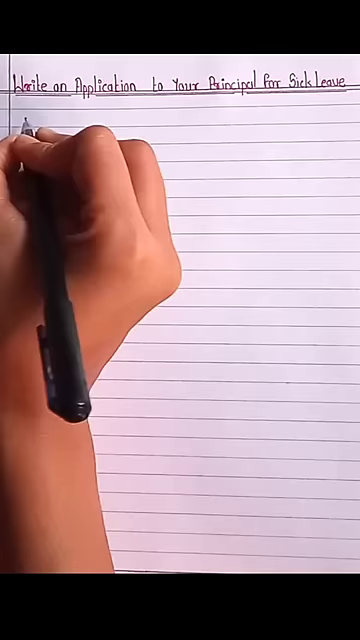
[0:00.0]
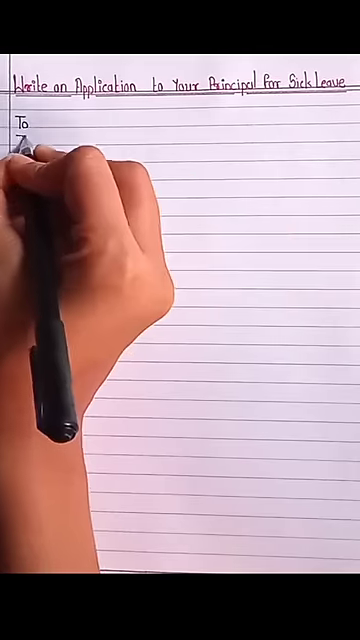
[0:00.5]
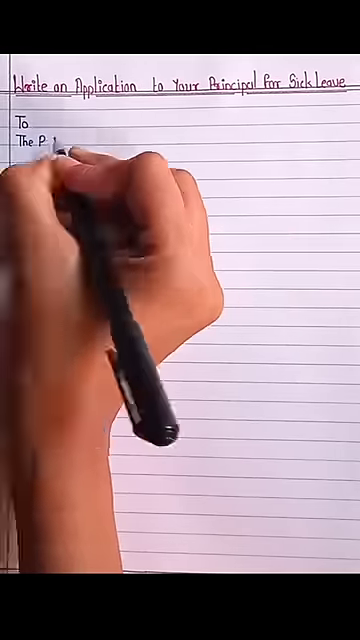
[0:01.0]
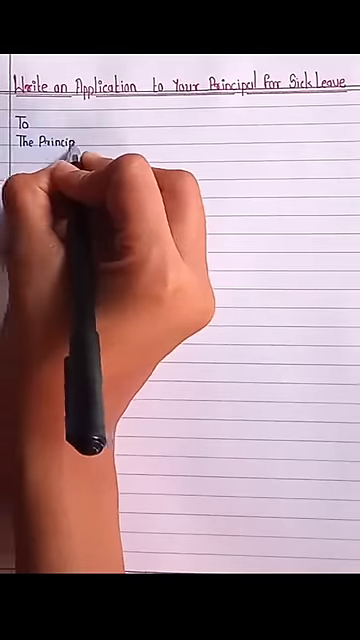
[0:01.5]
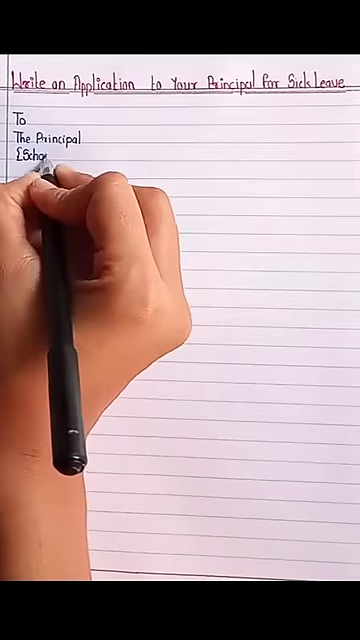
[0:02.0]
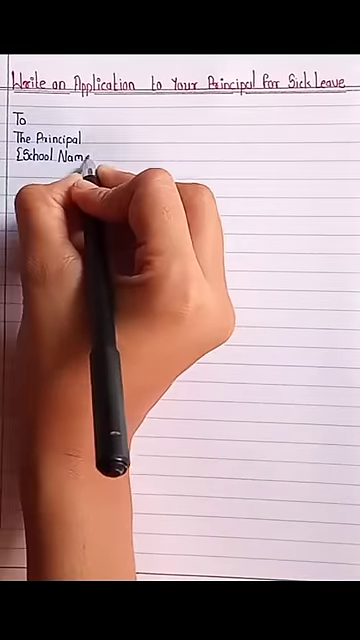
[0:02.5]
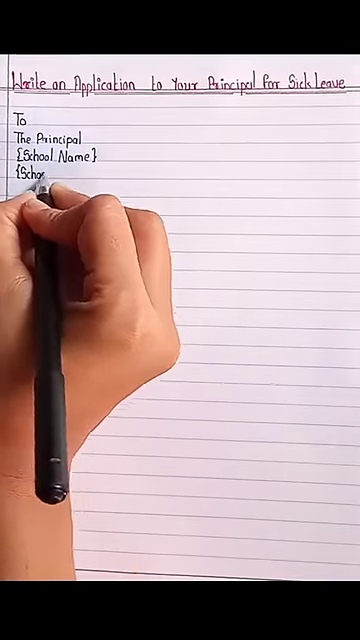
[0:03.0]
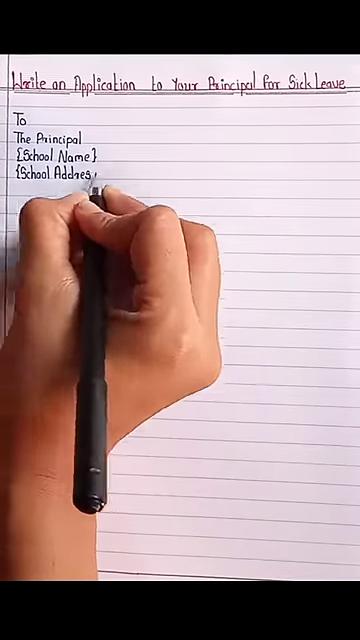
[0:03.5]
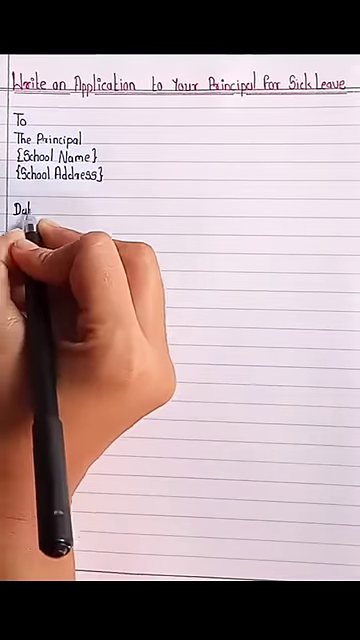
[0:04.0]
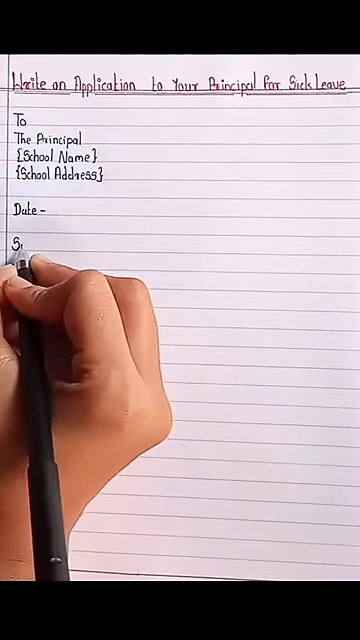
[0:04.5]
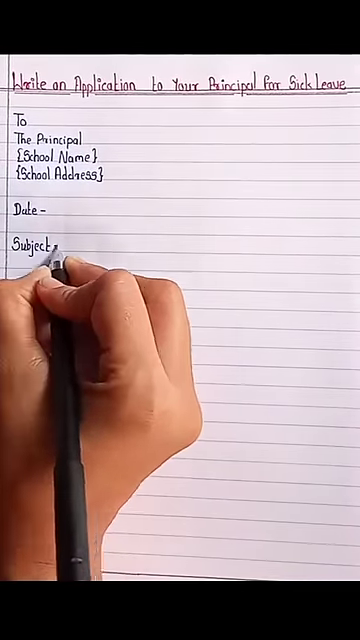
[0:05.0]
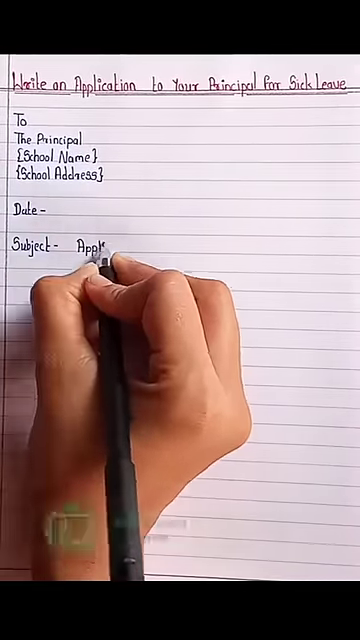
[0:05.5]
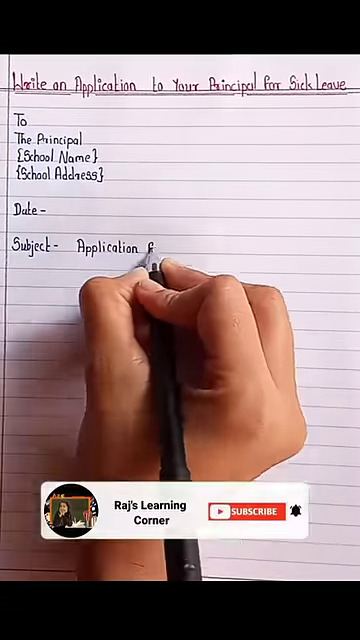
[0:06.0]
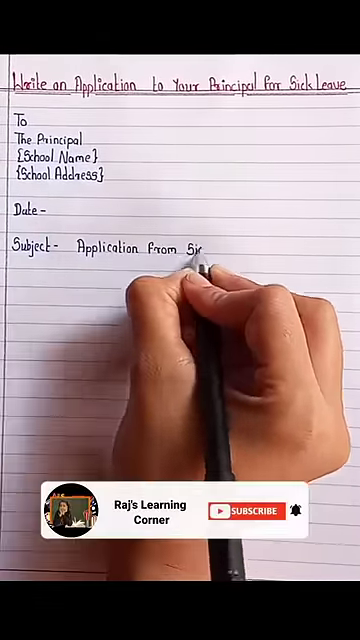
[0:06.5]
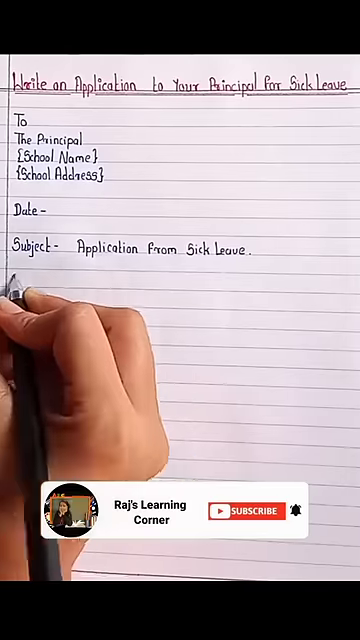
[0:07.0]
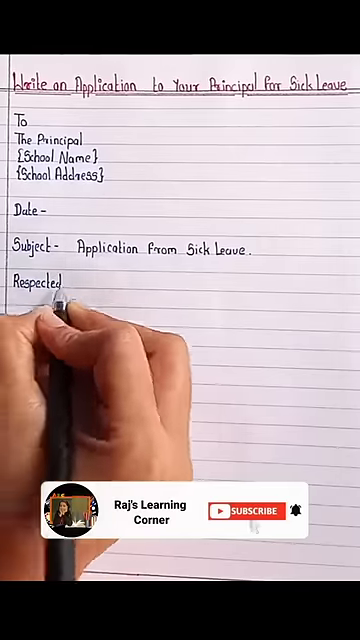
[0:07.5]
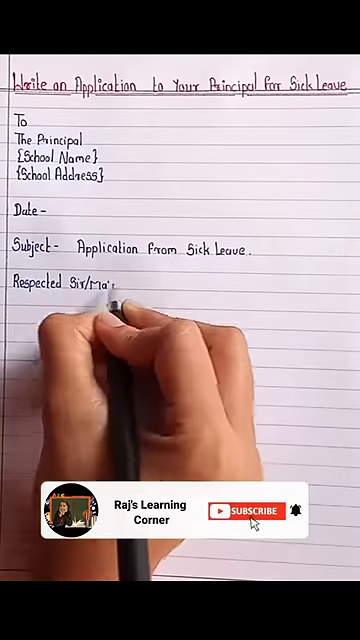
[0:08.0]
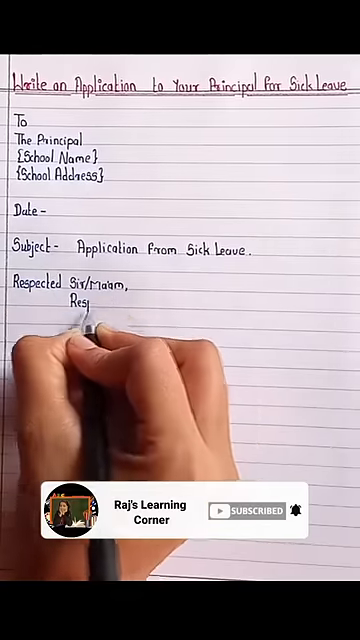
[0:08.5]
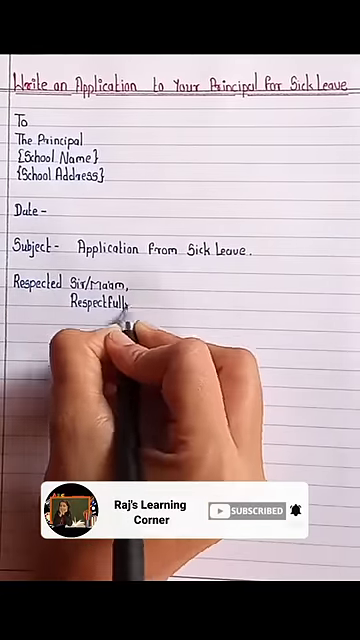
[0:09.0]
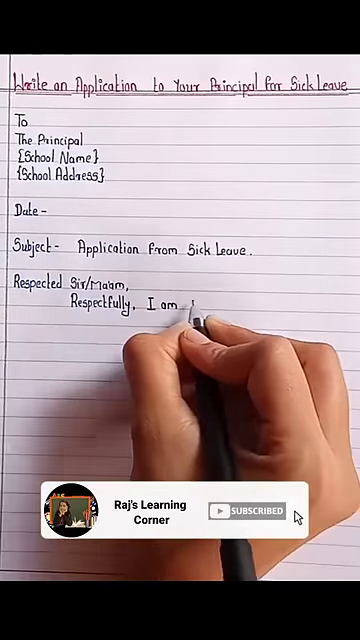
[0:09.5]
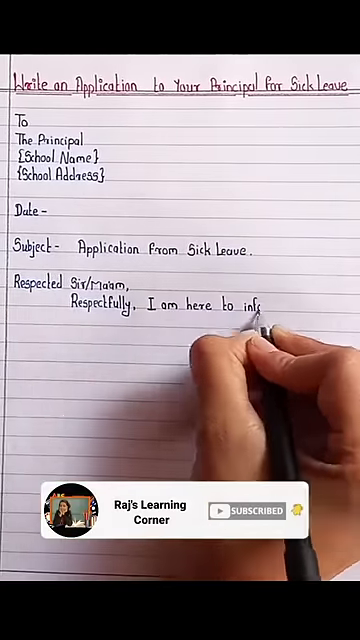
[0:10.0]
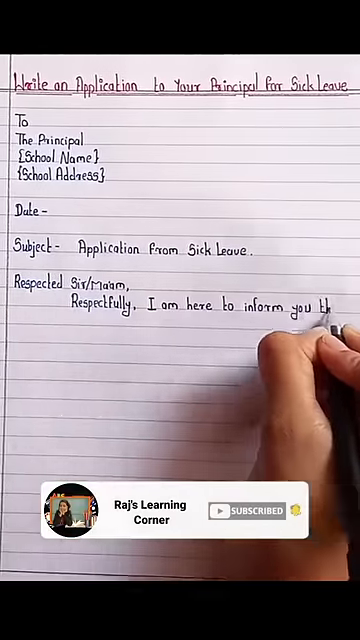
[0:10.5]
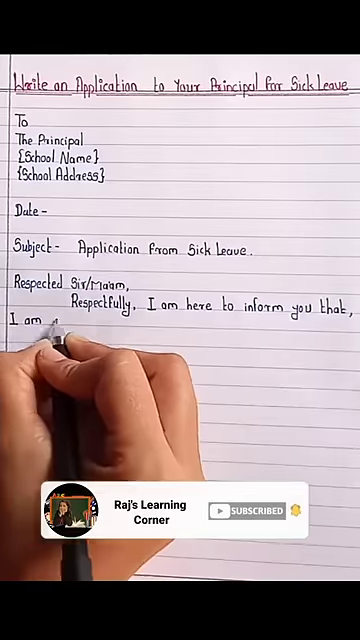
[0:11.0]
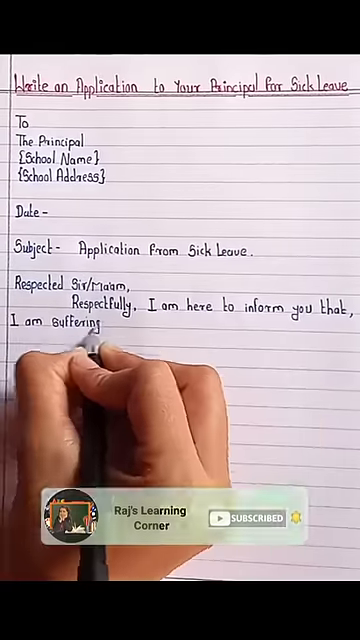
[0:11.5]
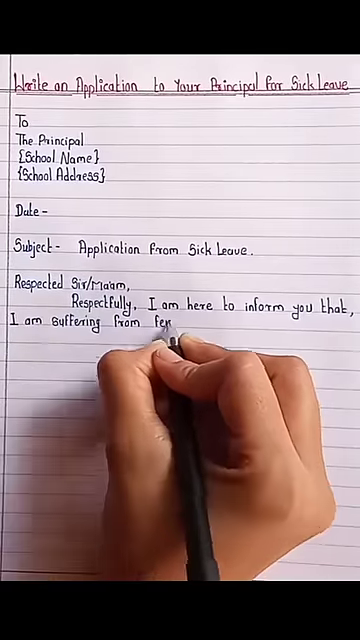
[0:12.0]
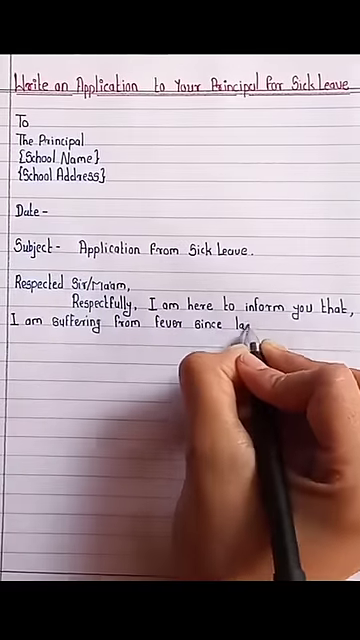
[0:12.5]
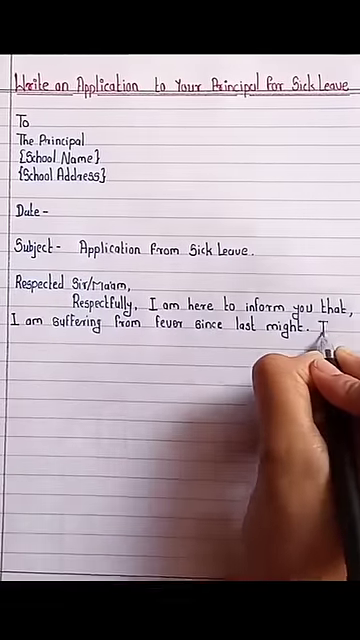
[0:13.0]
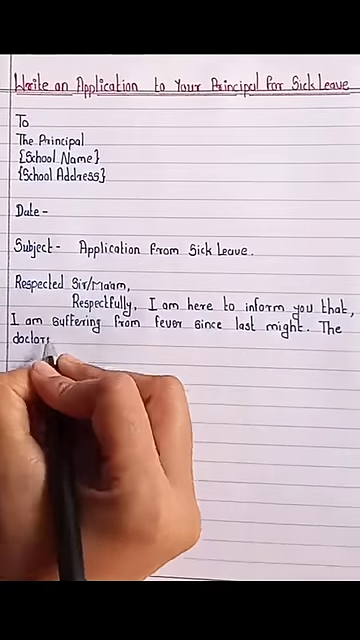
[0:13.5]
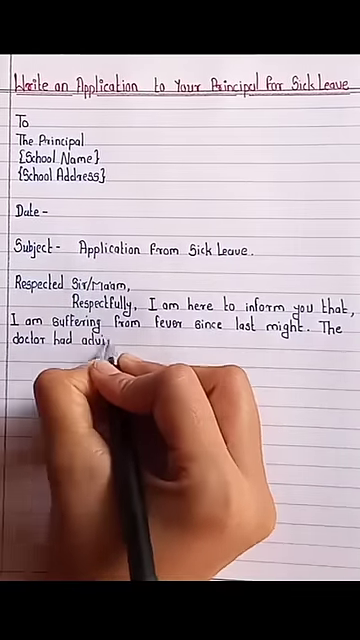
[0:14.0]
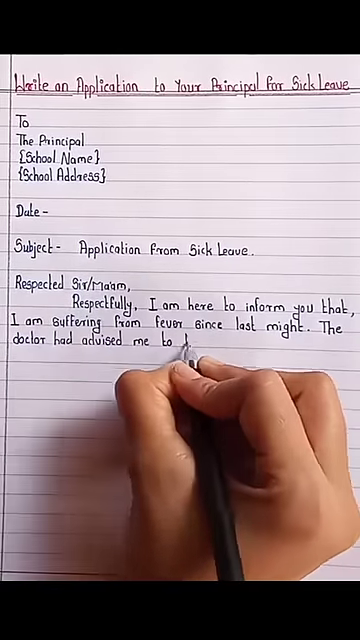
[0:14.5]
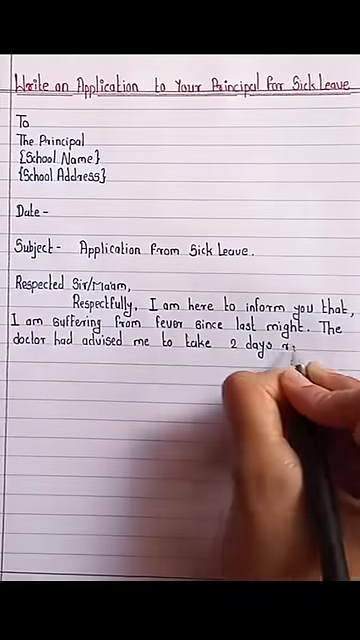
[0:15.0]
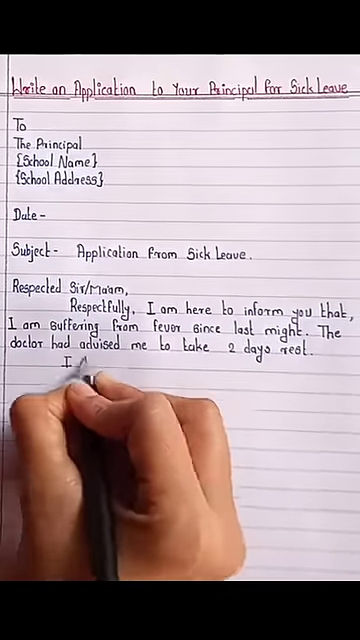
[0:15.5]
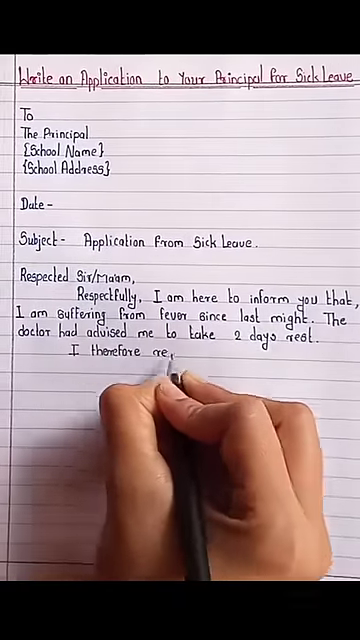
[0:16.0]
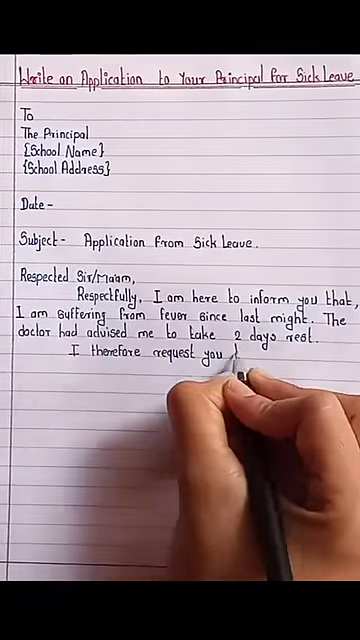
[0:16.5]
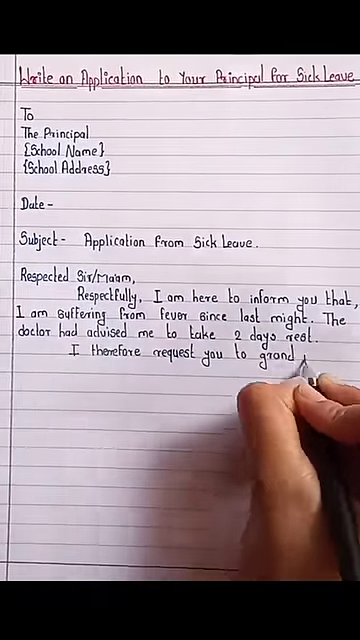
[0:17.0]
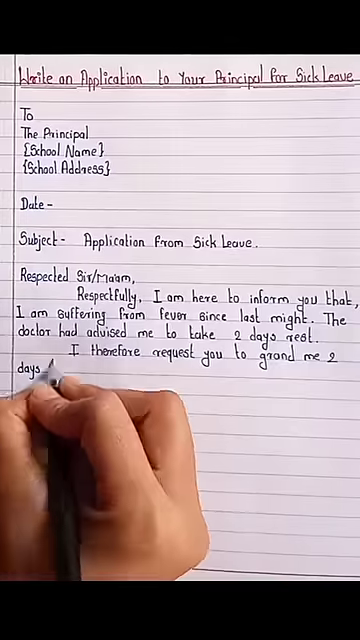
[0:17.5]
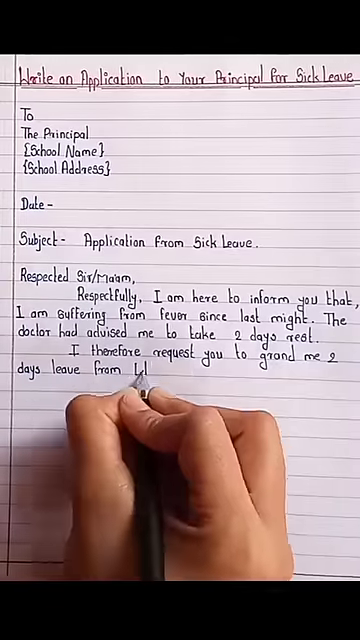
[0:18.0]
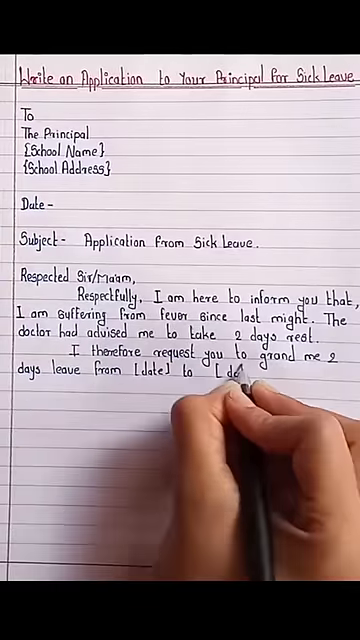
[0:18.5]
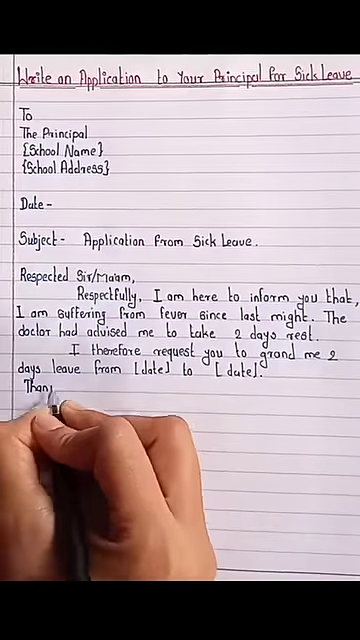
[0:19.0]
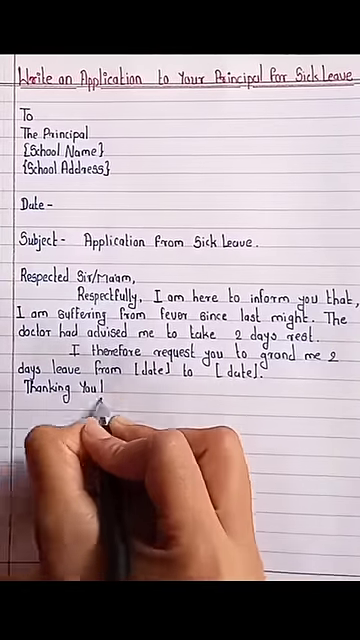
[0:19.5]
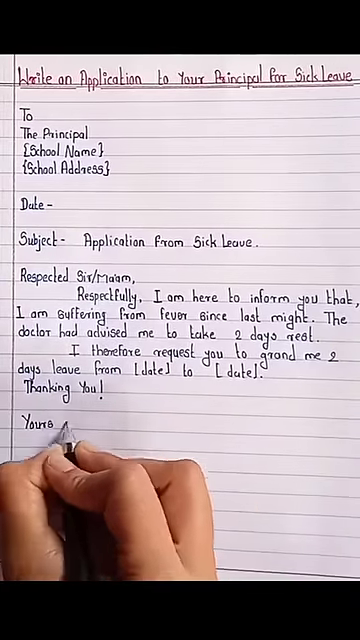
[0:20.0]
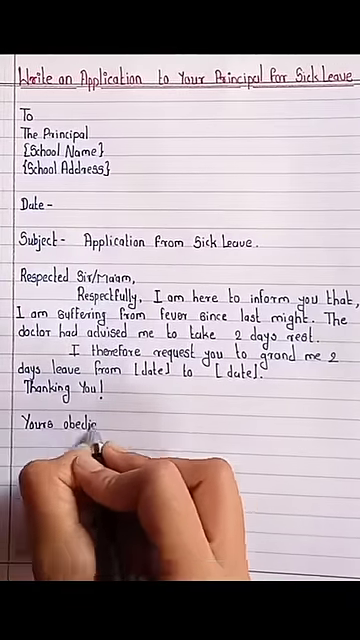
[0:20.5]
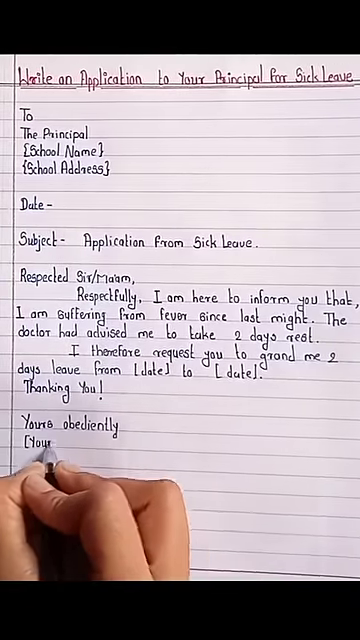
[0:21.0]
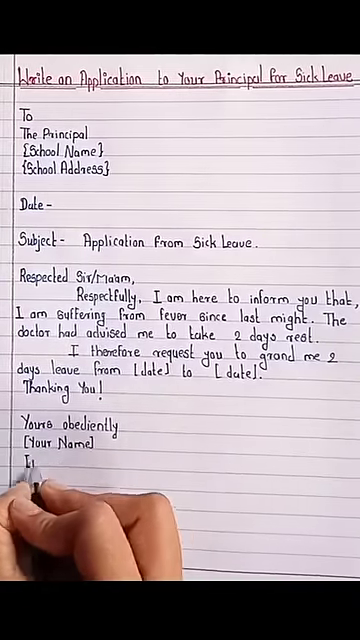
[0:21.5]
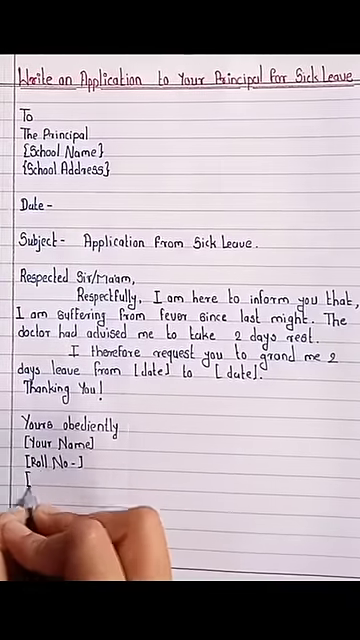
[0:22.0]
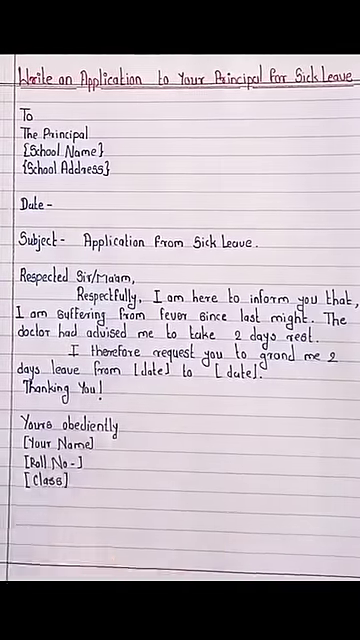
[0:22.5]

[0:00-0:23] A girl writes quickly and very neatly in a notebook, in great penmanship. She is writing an application to a principal for sick leave, laid out as a template for a professional letter. The template shows who the letter is going to (the principal), the school name, the date, and the subject, and it includes an opening and a closing. The letter reads something like "respected sir, madam," followed by a line saying the writer is here to inform the principal that they are suffering from fever.